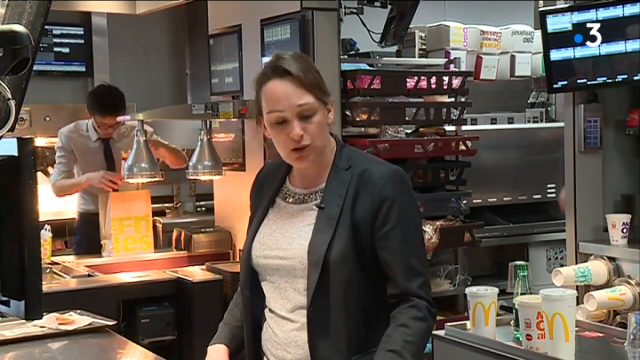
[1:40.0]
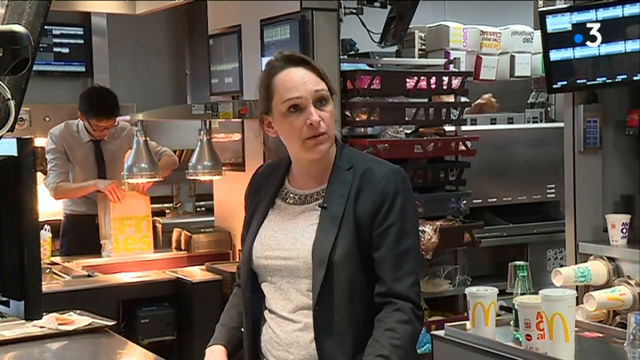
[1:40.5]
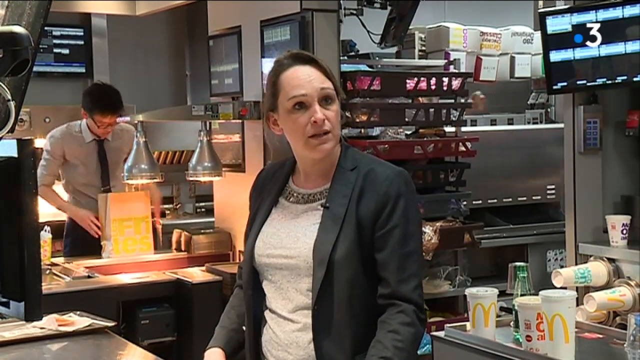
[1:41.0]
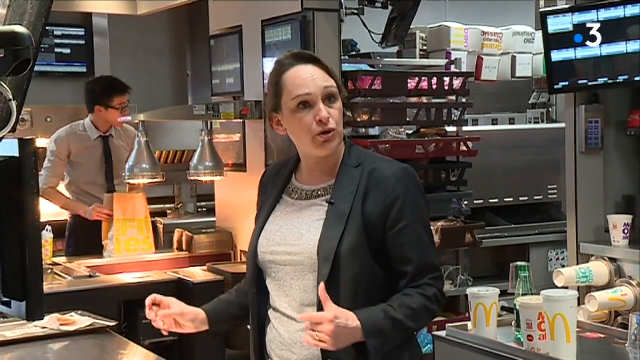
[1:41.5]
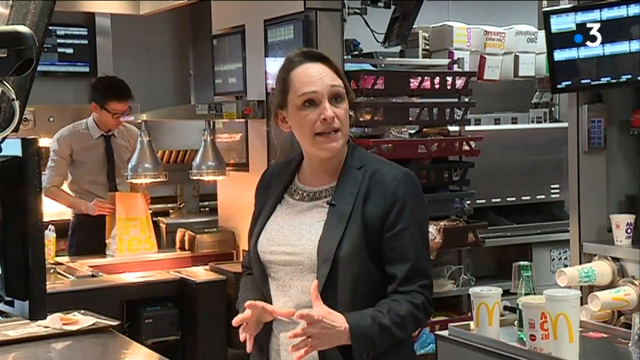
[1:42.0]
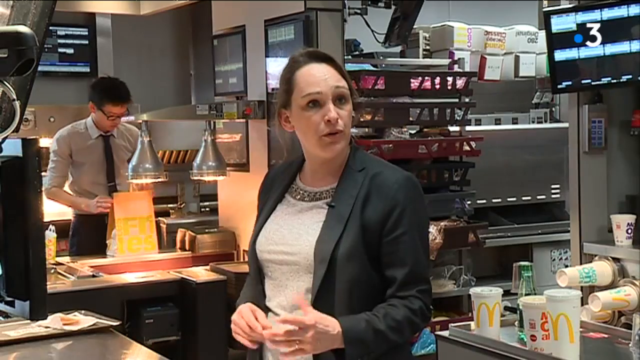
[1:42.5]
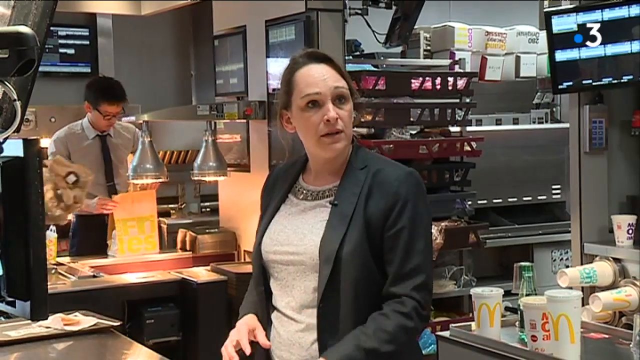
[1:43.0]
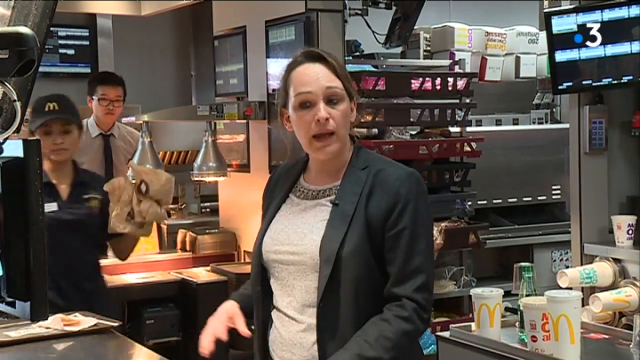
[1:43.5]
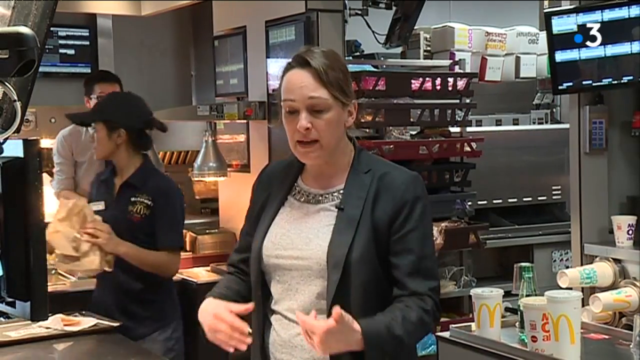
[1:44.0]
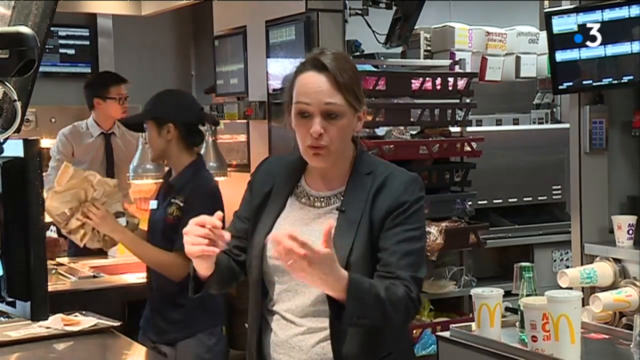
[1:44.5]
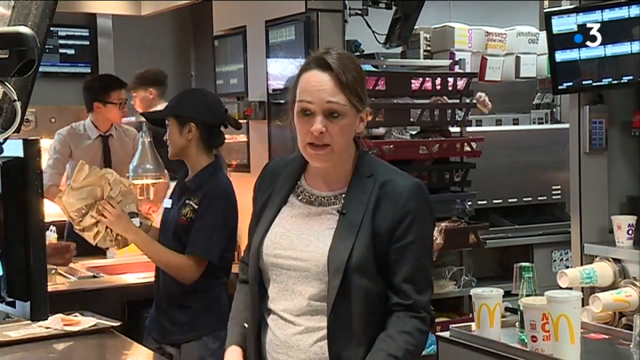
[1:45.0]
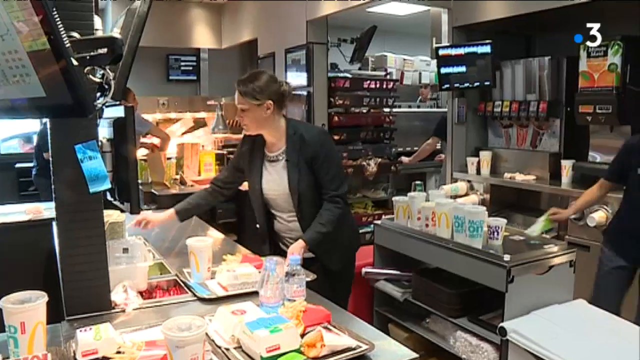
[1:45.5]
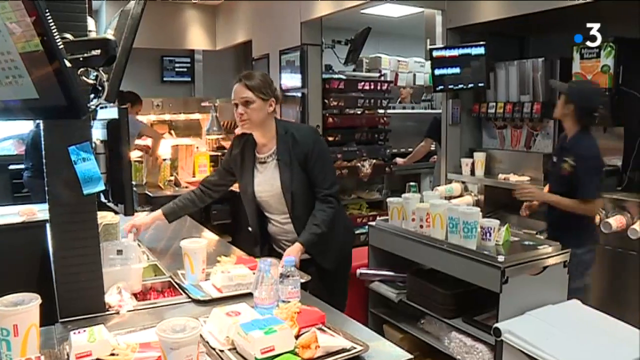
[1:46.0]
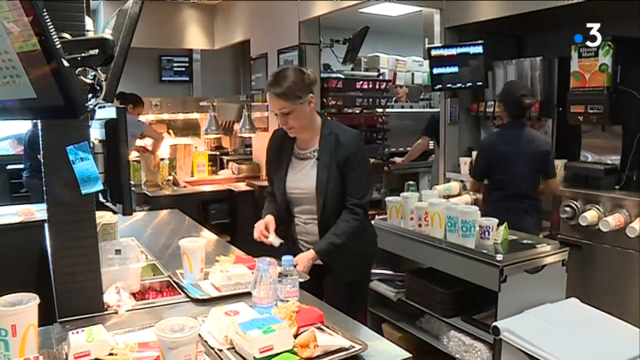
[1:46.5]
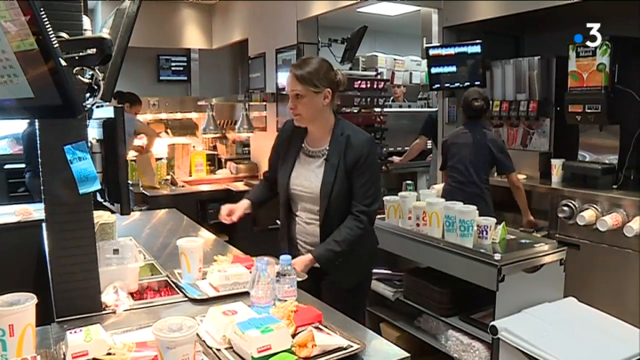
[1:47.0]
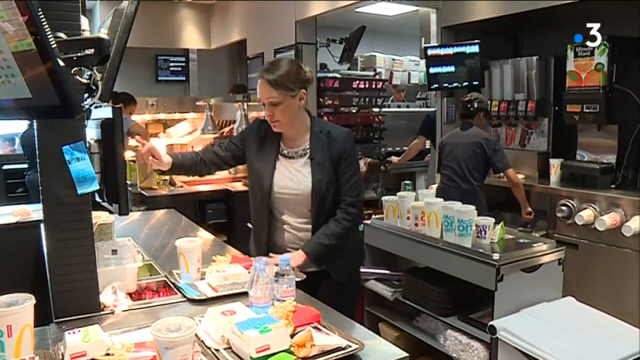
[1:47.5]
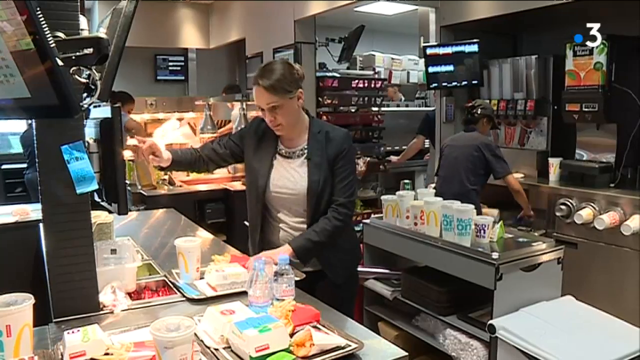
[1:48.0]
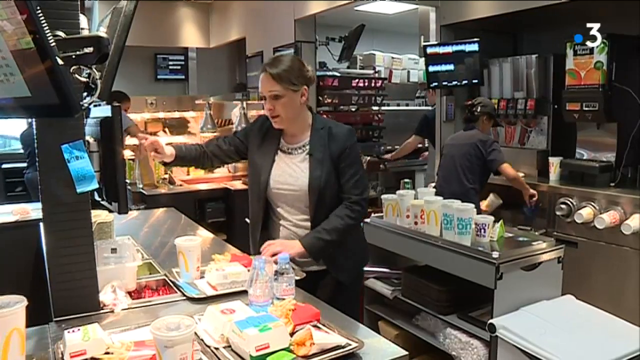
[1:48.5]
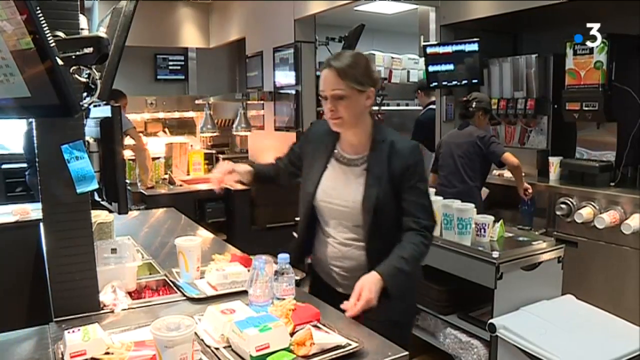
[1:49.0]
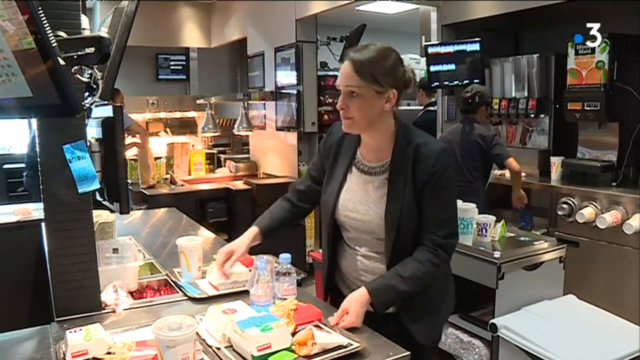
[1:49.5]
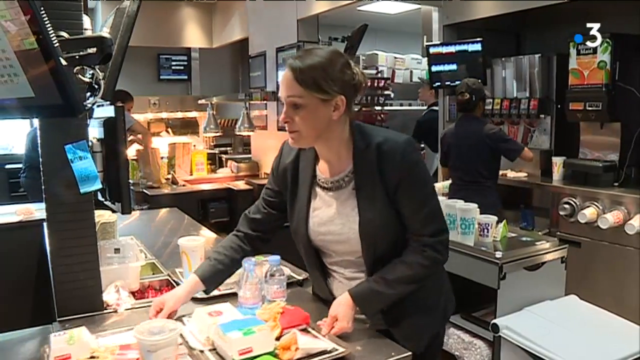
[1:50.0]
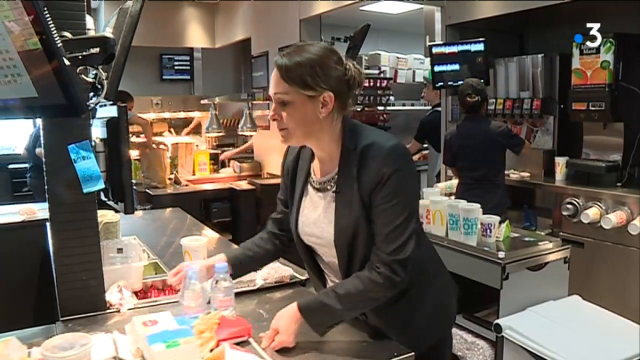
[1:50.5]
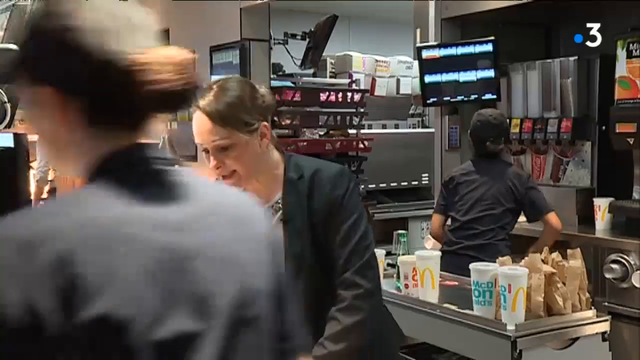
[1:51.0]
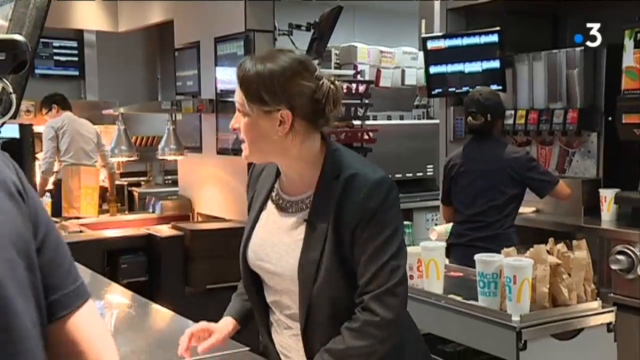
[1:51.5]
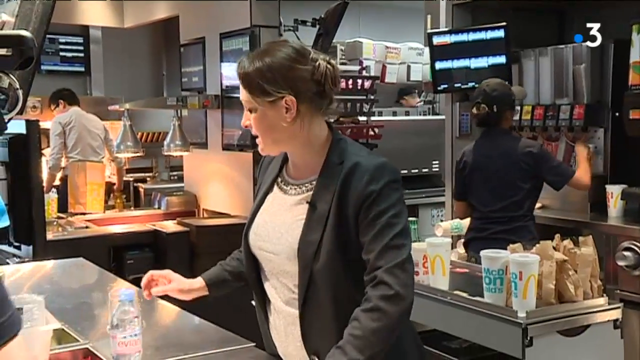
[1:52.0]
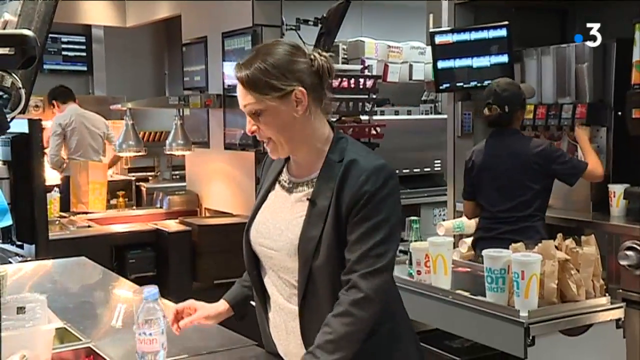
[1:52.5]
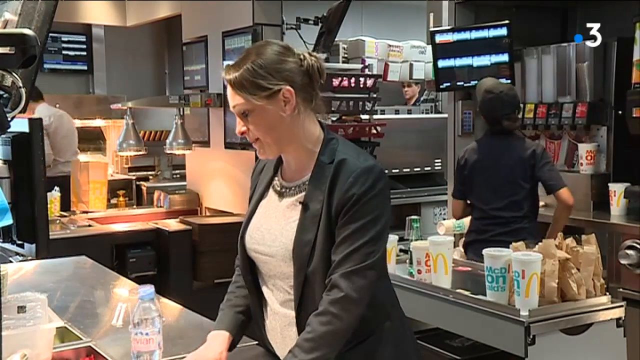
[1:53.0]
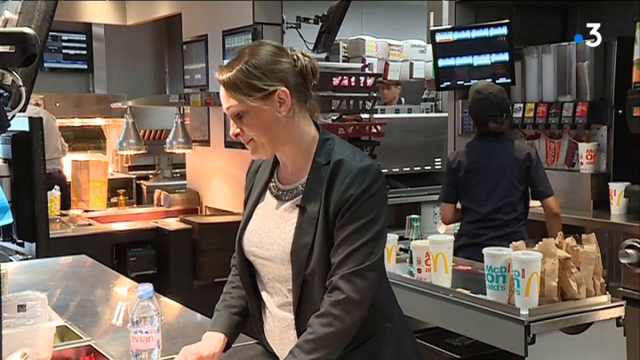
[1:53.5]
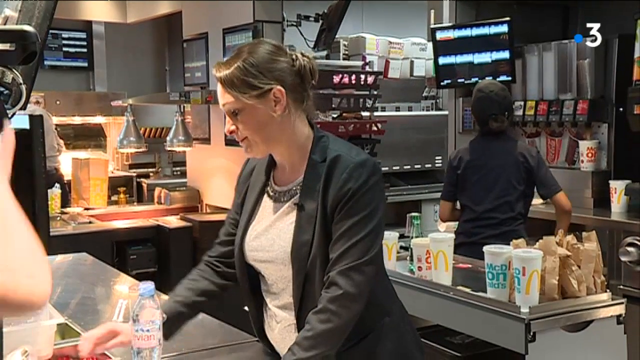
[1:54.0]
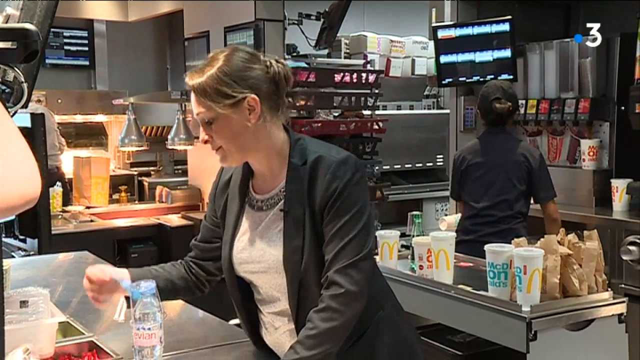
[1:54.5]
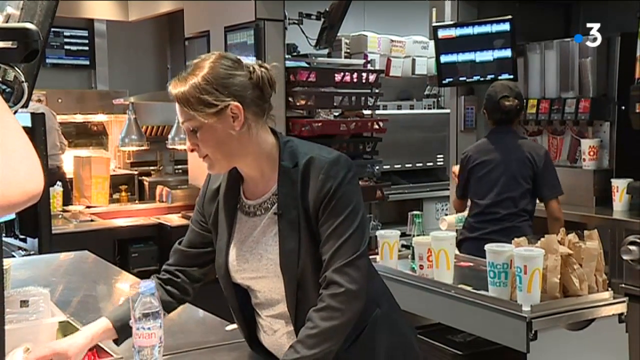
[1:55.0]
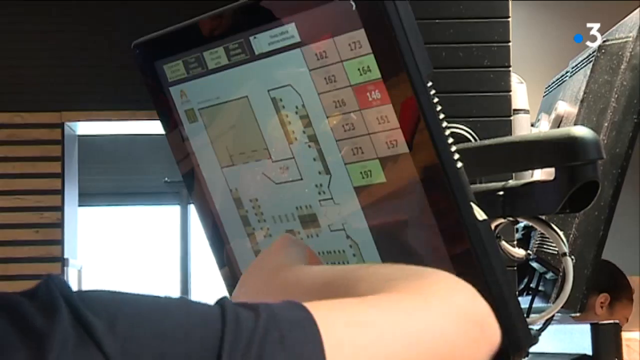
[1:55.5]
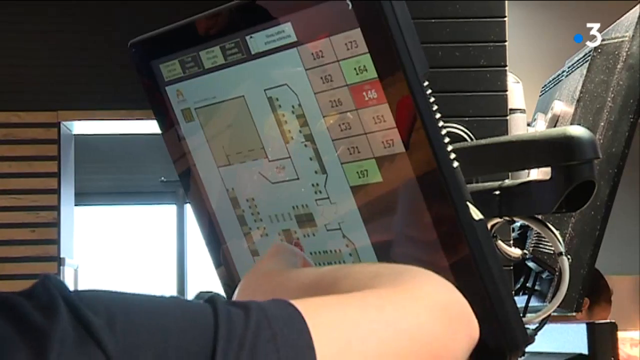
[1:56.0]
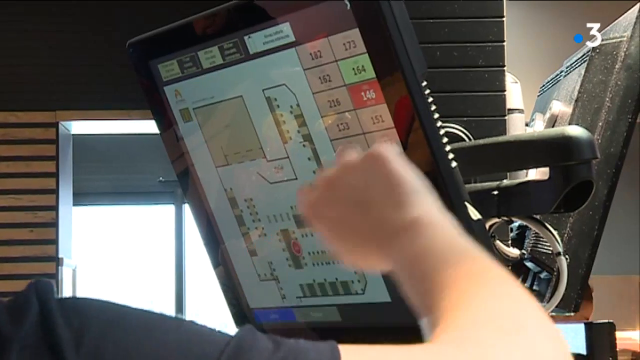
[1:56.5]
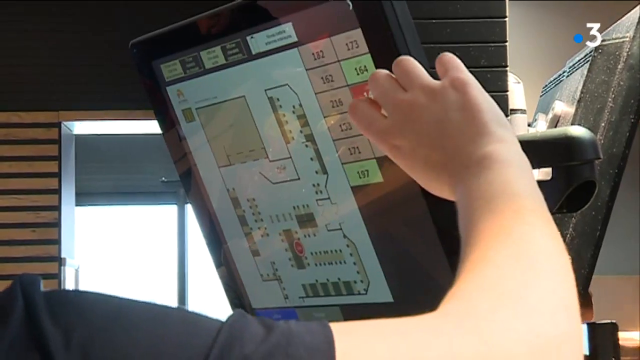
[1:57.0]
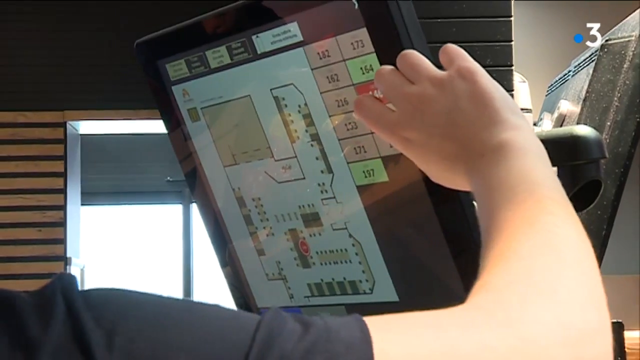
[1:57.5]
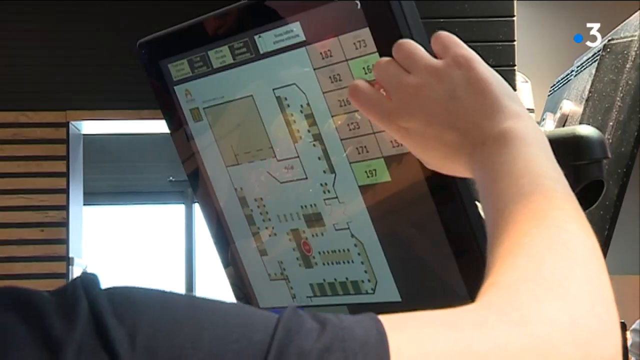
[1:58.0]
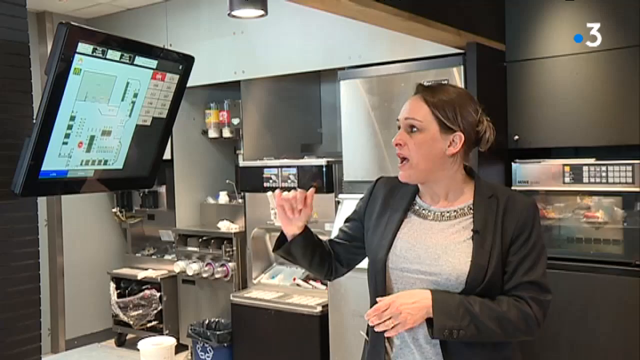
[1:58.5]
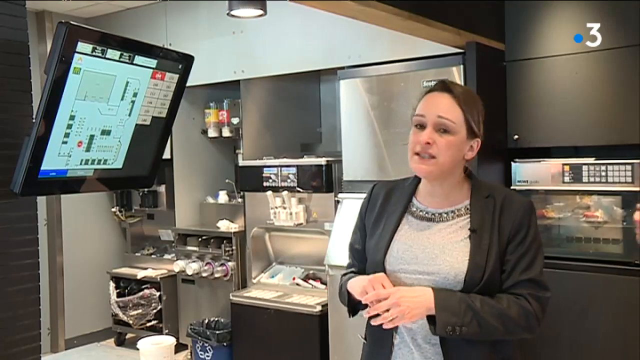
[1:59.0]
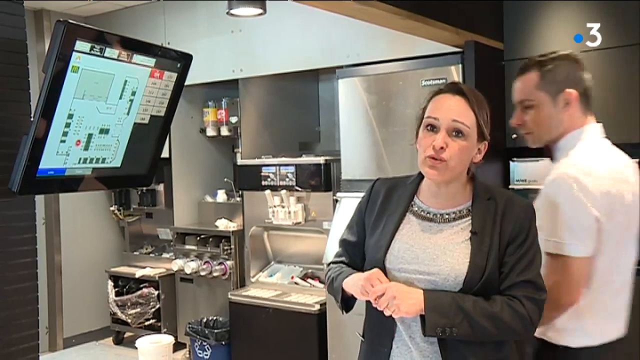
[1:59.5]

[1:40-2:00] A woman in a gray jacket and a white shirt stands in a McDonald's kitchen speaking to the camera, with trays of food behind her and a McDonald's worker in a black cap and short-sleeved black shirt. The woman then looks at a tray of food and places items on the McDonald's tray while workers behind her move around, put food in bags and get drinks from a drink machine. She moves one of the trays forward and reaches forward to grab something from a tray in front of her. She speaks while looking down rather than at the camera. Behind her is a line of McDonald's bags and McDonald's drink cups that look like they are waiting to be placed into bags to fill orders. A close-up shows a screen with numbers and possibly a diagram of the restaurant, as a worker's hand presses buttons with numbers on them; it seems to be a screen that keeps track of orders. The video returns to the woman in the gray jacket speaking directly to the camera.